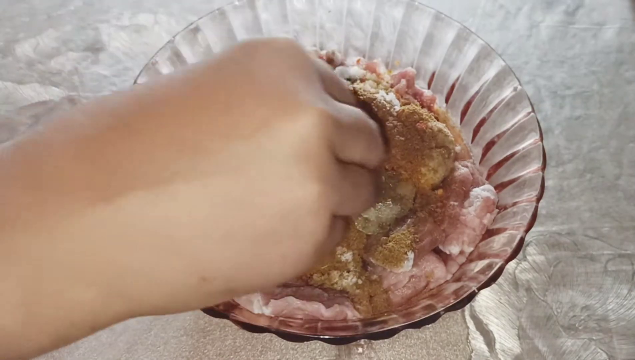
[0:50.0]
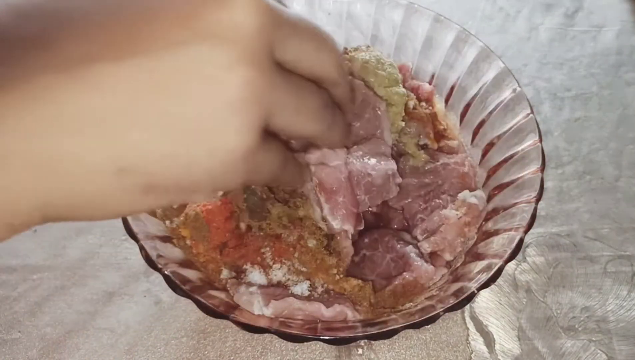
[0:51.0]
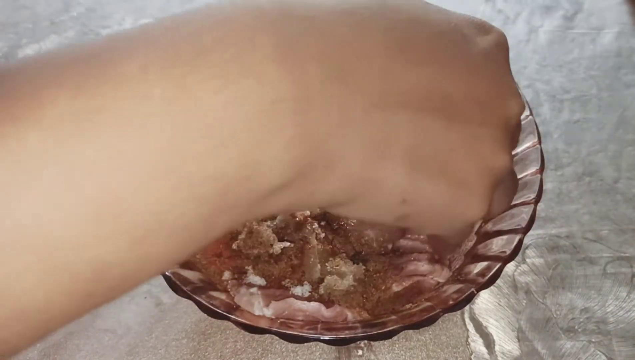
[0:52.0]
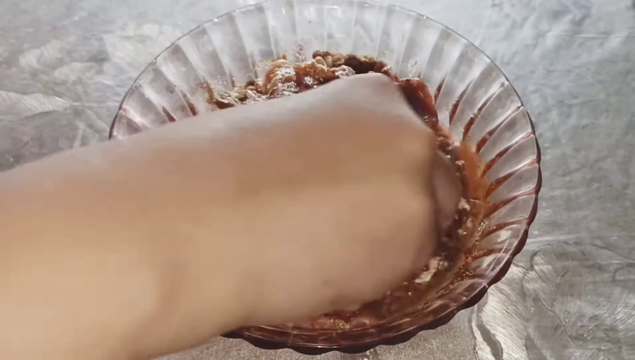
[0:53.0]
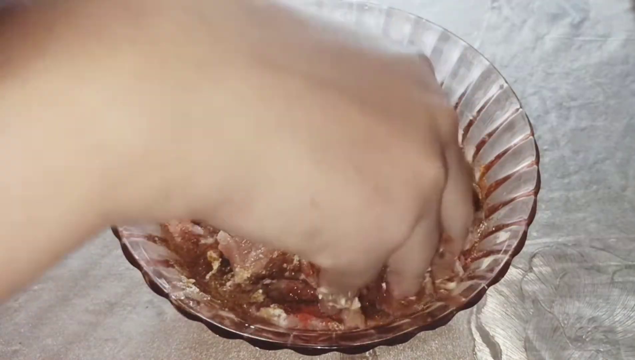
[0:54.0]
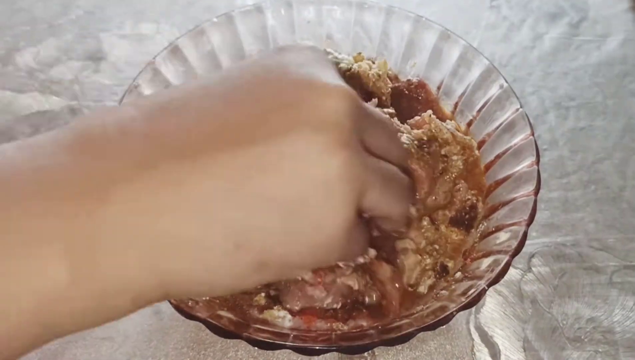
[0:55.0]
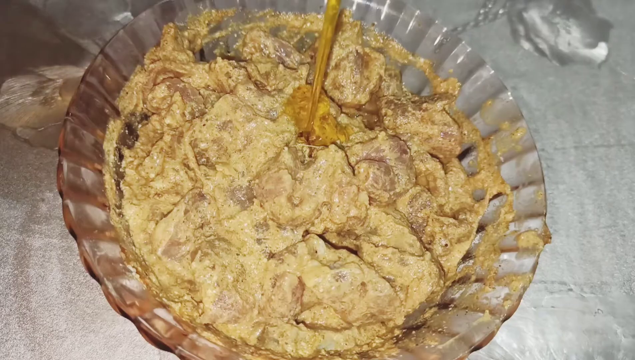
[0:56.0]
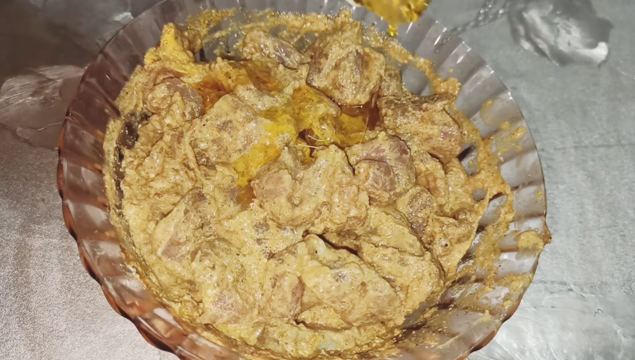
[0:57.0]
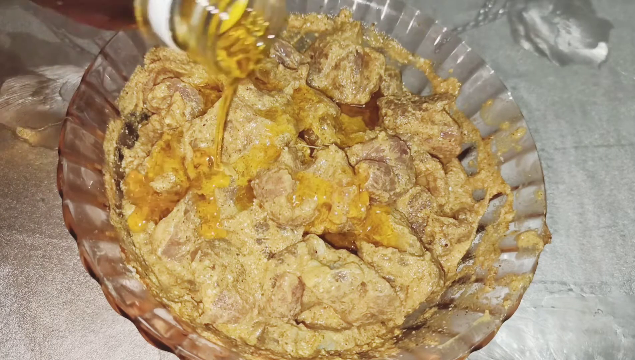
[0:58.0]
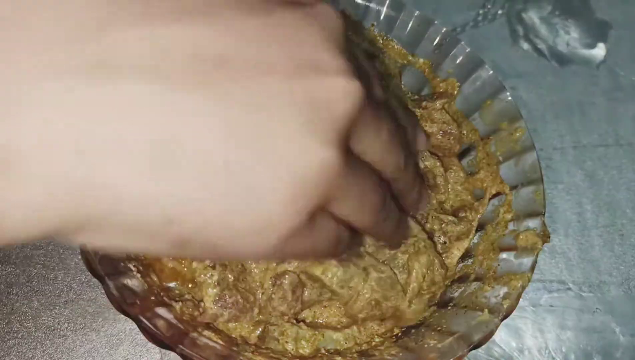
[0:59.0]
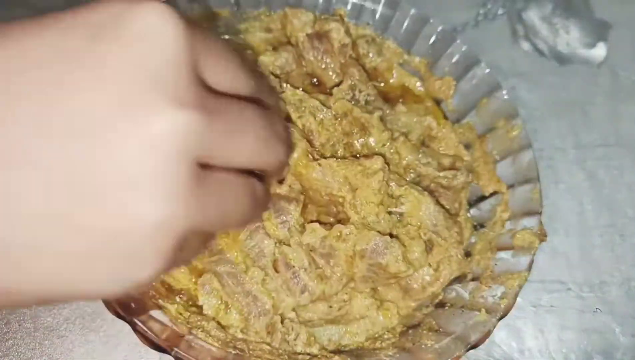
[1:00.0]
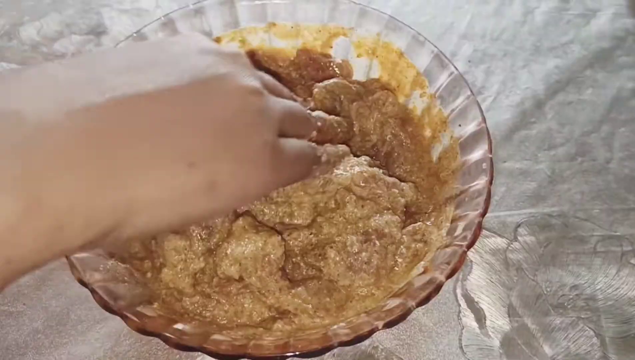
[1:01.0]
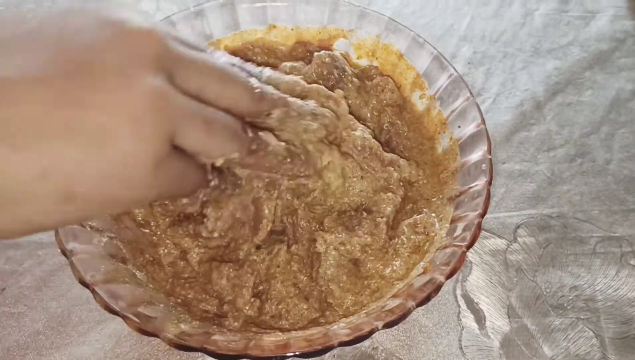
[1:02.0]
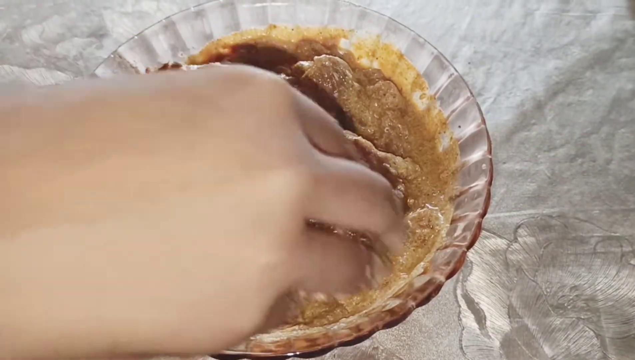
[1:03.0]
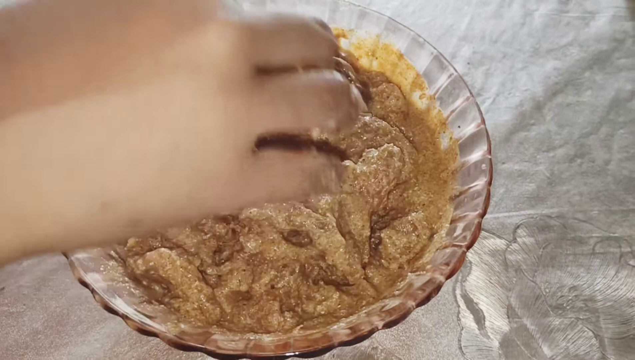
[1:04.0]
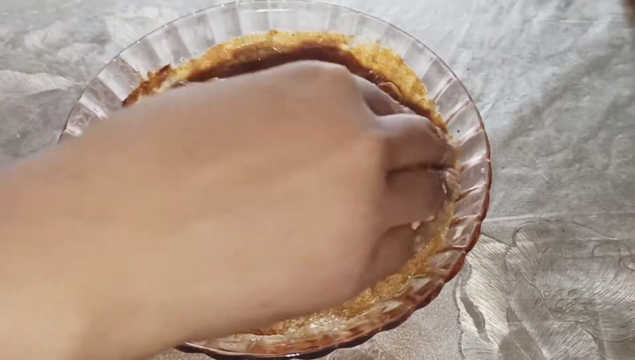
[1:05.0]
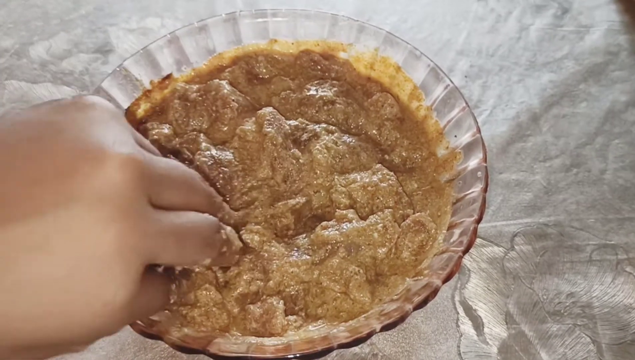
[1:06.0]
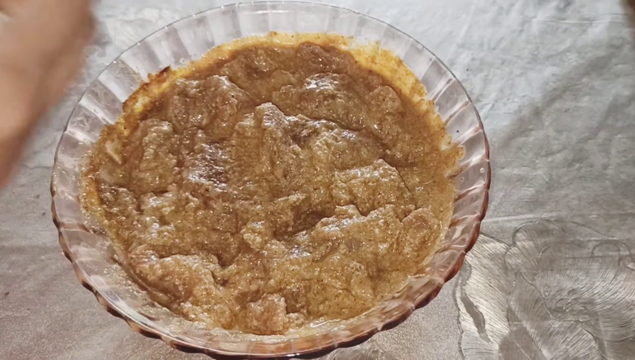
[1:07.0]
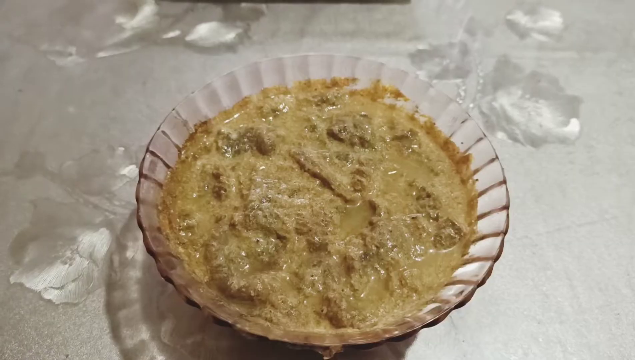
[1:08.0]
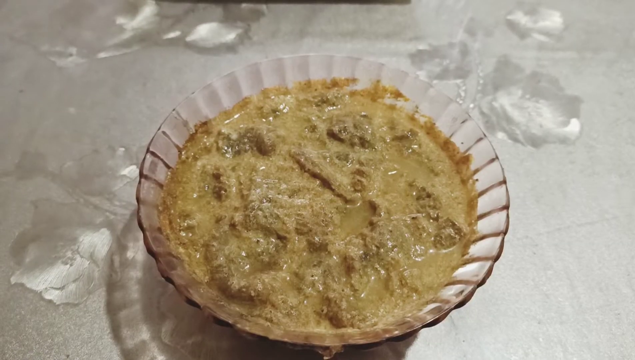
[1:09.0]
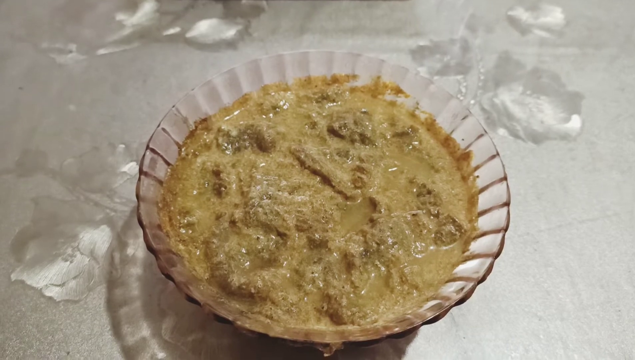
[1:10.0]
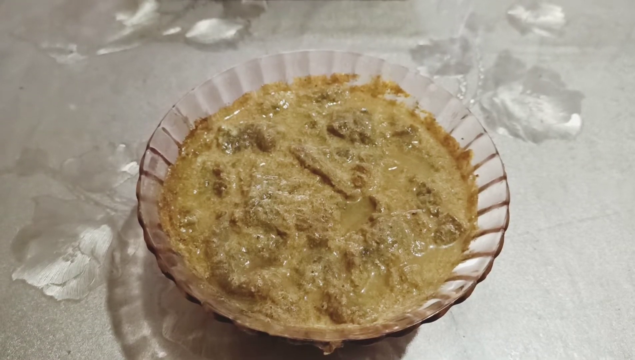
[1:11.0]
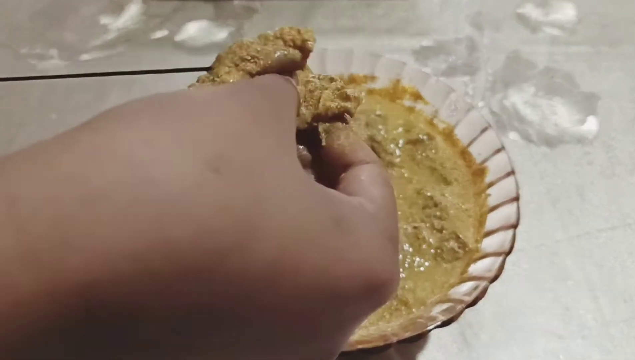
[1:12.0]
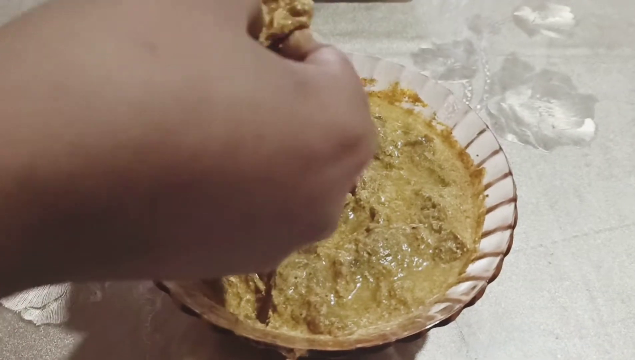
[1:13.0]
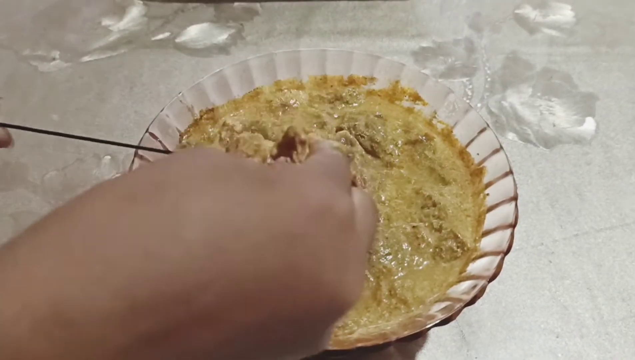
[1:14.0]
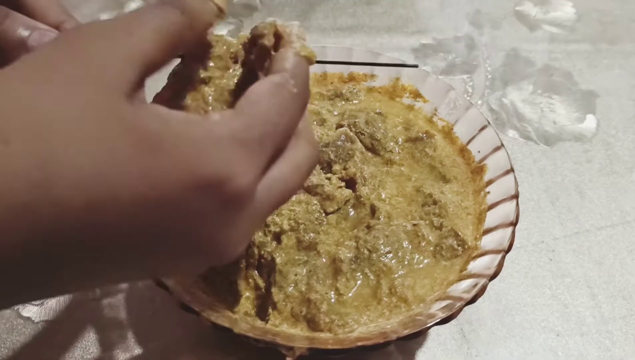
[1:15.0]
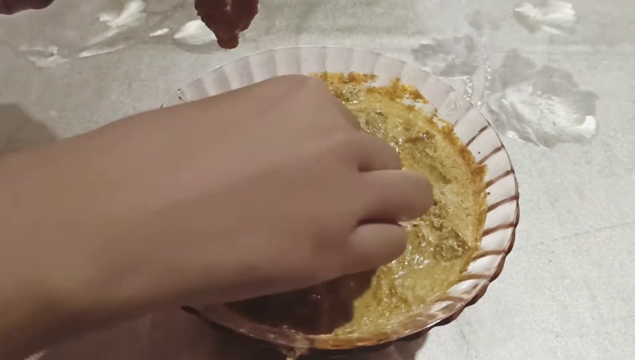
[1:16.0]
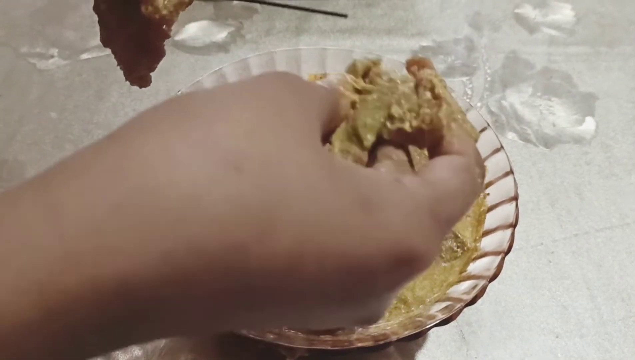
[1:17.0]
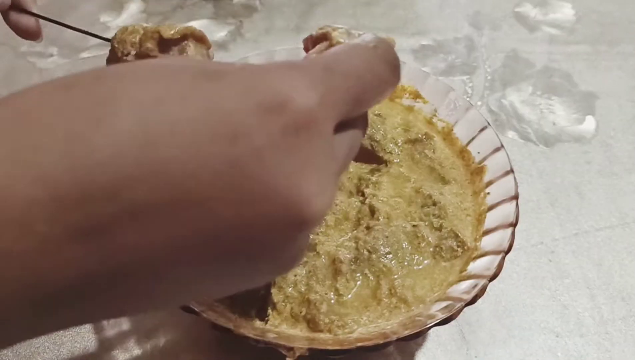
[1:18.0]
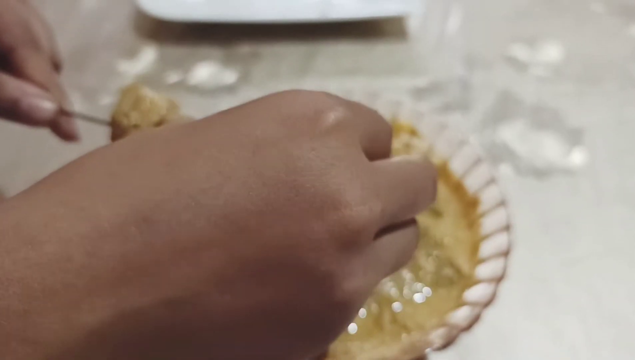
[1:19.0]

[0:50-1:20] A person stirs a mixture of seasonings in a bowl filled with cut fillets, with red, yellow and brown seasonings visible. The video then jumps forward to the finished mixture: the bowl is filled with a very light brownish-yellow creamy sauce with the fillets in it. The person pours a small amount of oil into the bowl and mixes it again. Next, a person holds a long metal skewer with a sharp point over the bowl, reaches into the bowl and grabs fillets one by one, adding them onto the skewer just above the bowl. Three pieces of meat are added onto the point and pushed down the skewer.